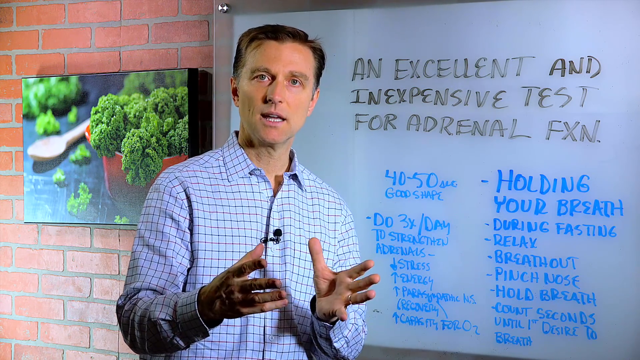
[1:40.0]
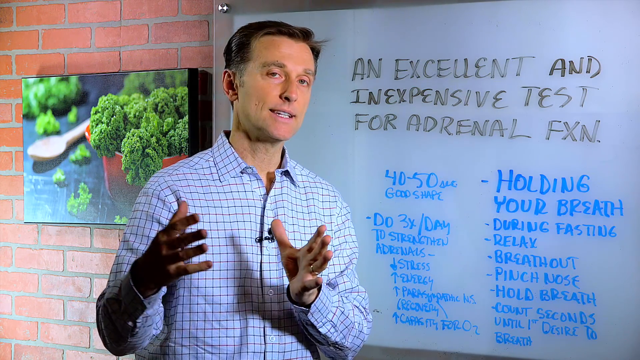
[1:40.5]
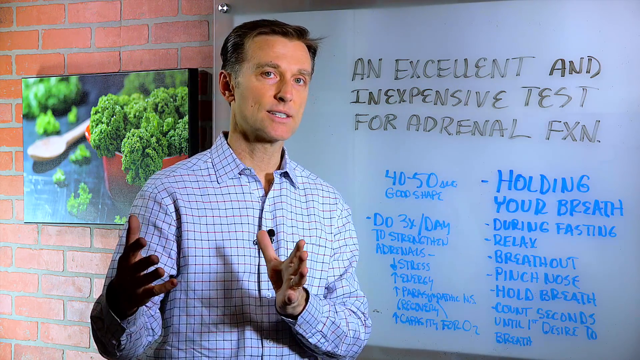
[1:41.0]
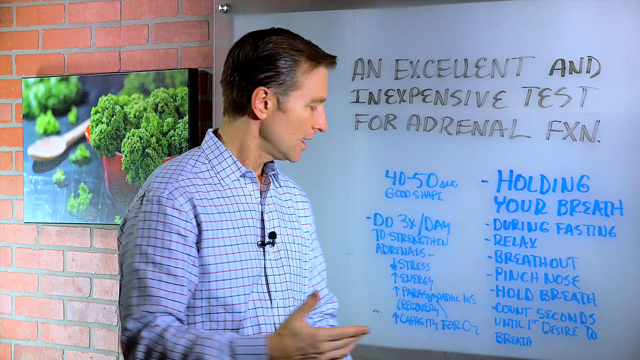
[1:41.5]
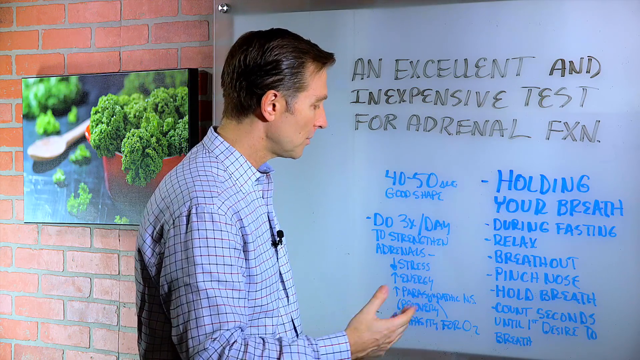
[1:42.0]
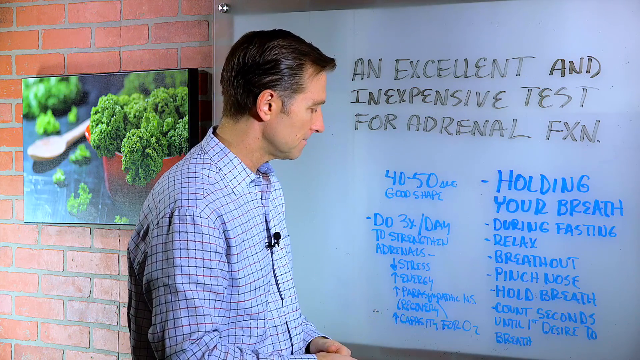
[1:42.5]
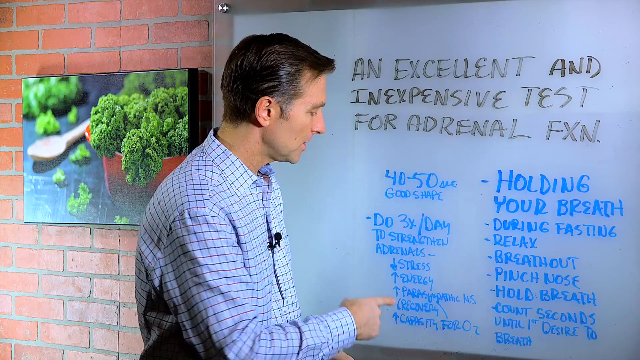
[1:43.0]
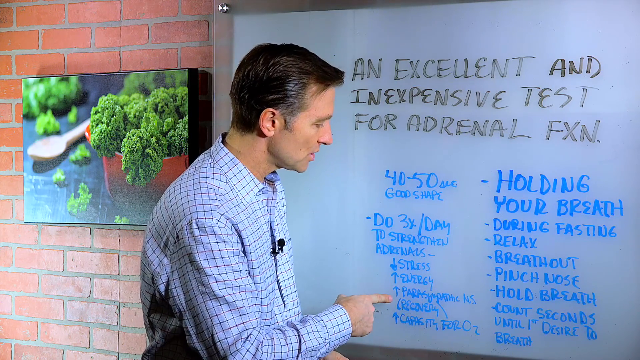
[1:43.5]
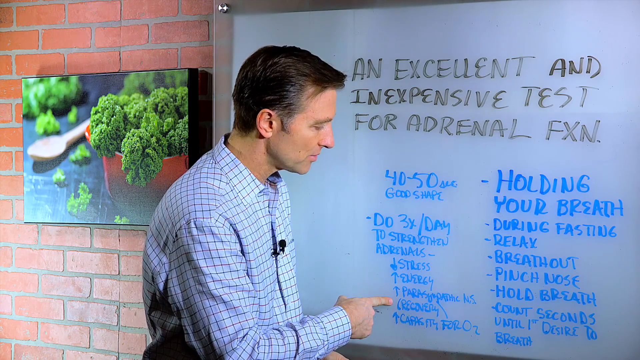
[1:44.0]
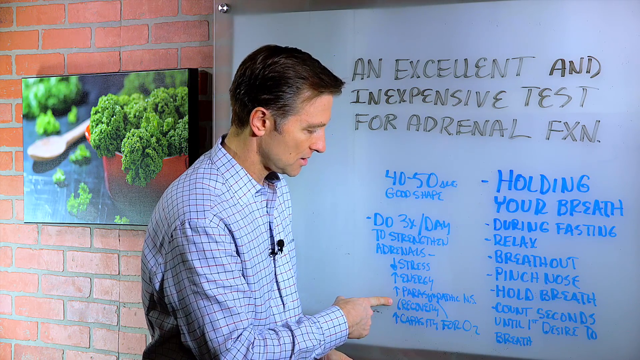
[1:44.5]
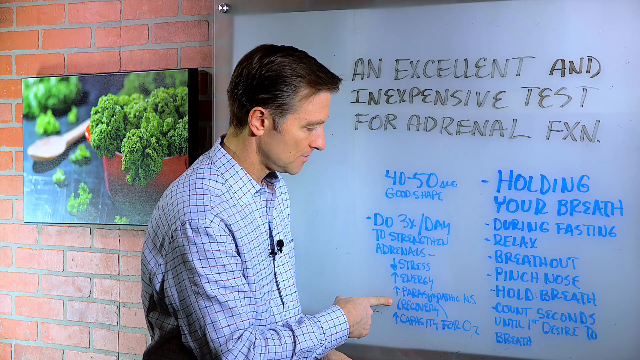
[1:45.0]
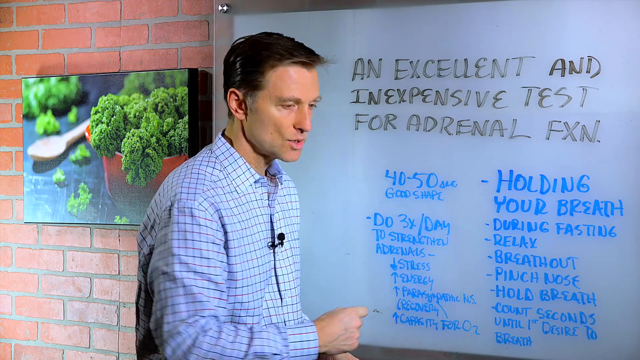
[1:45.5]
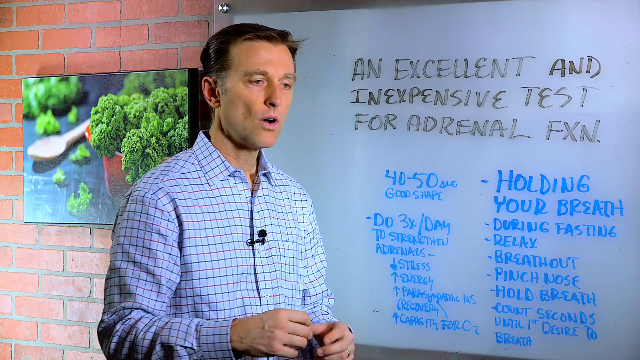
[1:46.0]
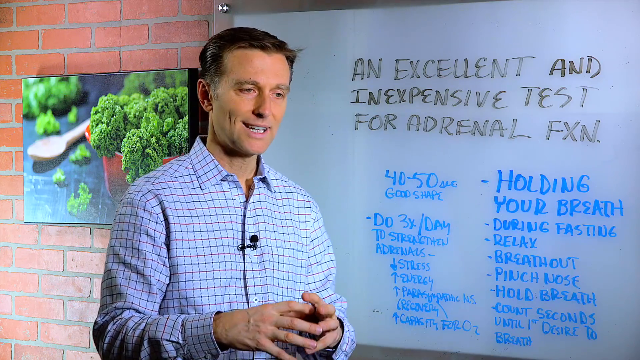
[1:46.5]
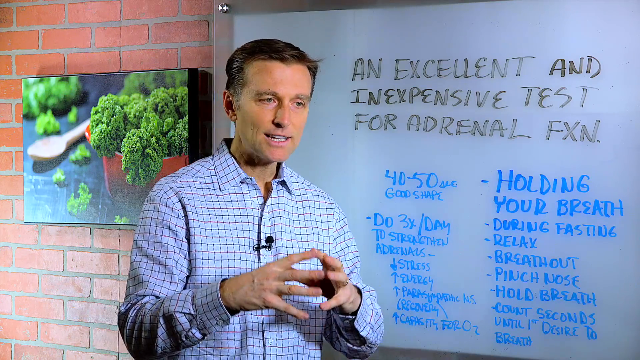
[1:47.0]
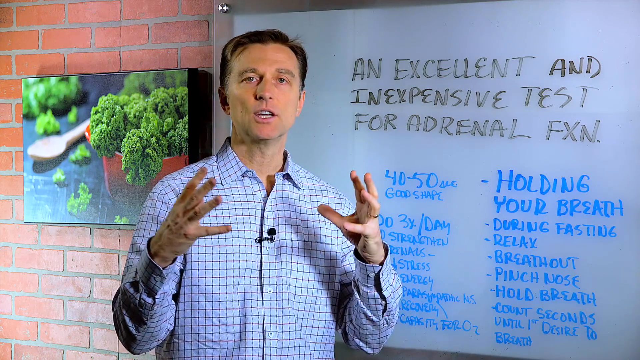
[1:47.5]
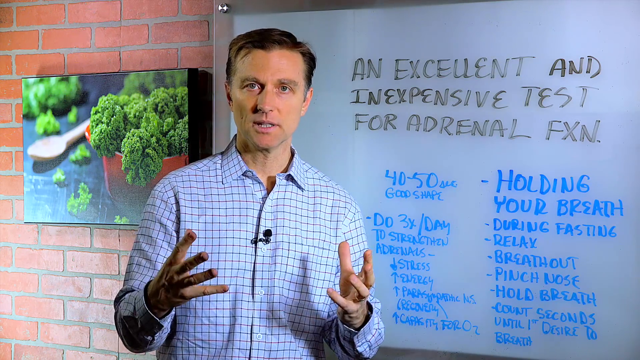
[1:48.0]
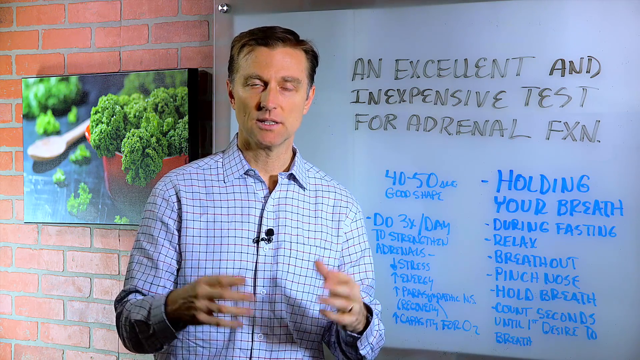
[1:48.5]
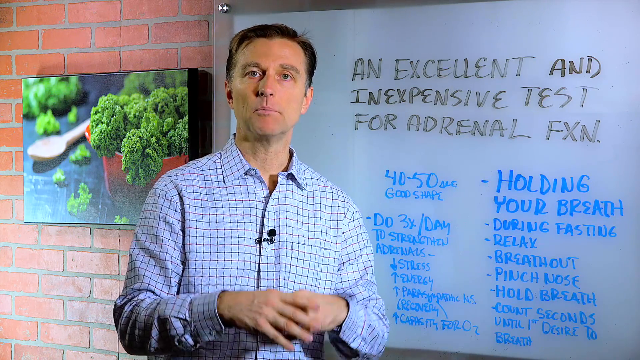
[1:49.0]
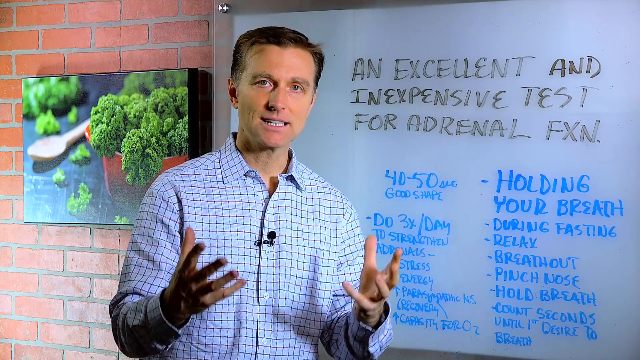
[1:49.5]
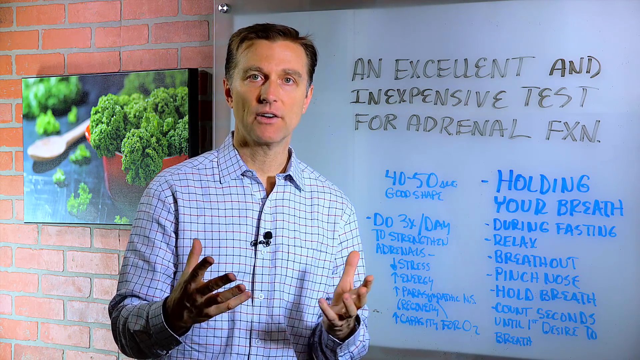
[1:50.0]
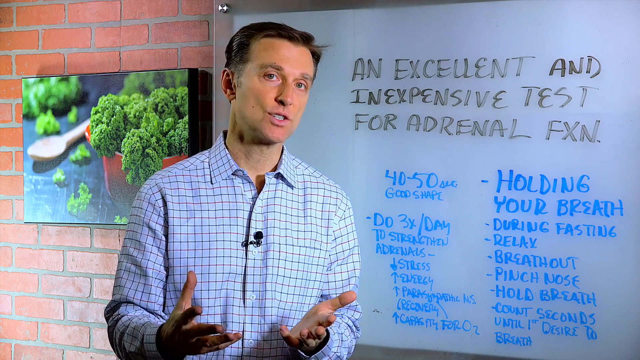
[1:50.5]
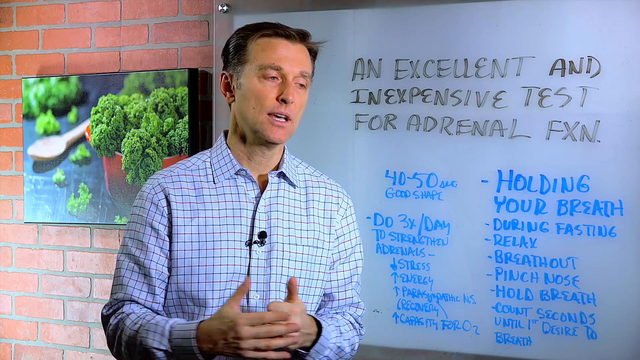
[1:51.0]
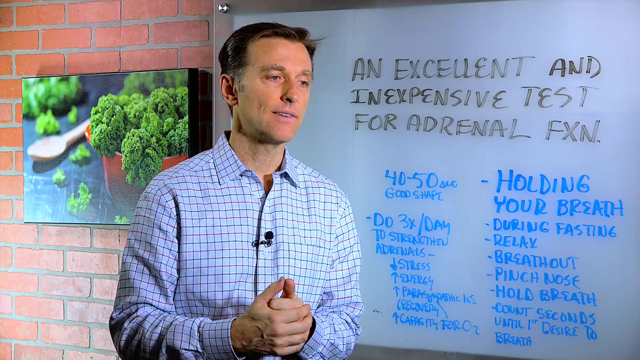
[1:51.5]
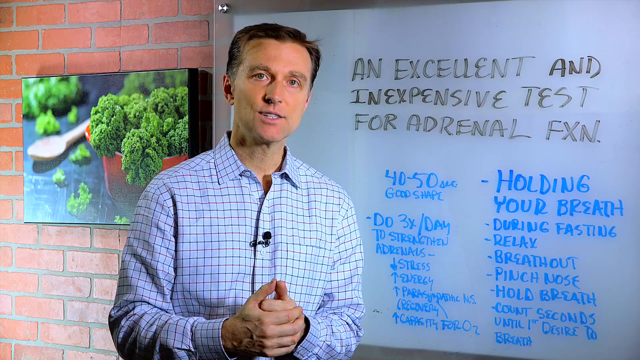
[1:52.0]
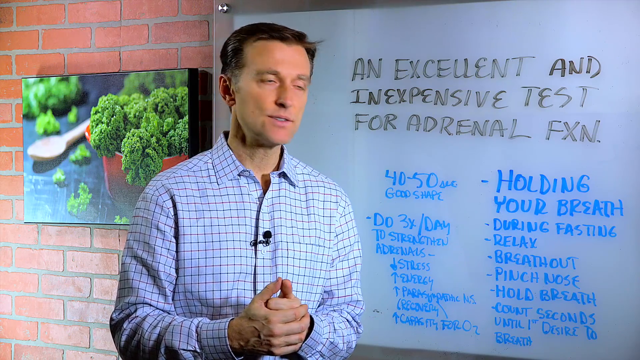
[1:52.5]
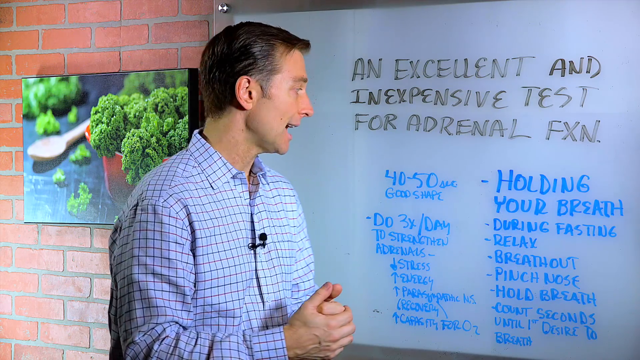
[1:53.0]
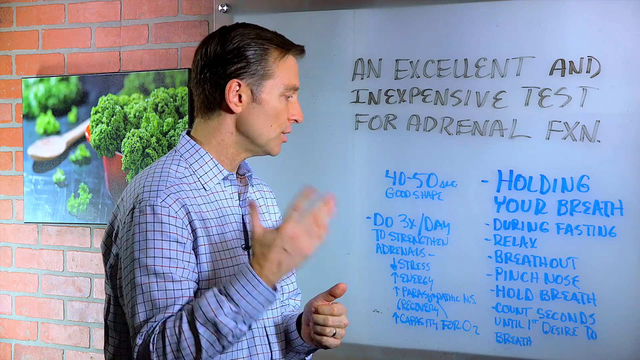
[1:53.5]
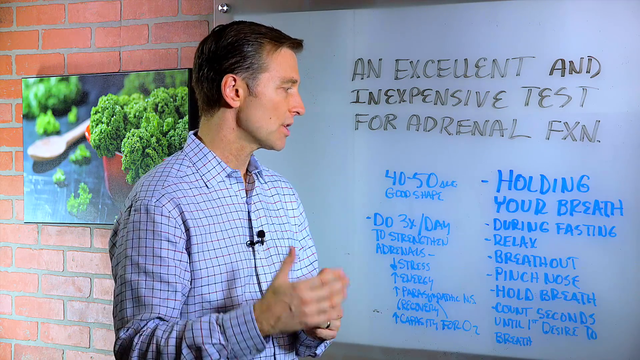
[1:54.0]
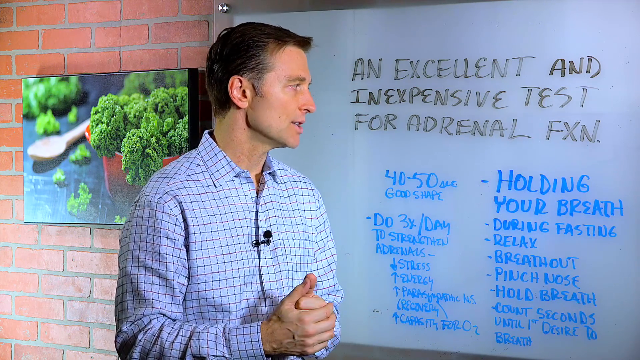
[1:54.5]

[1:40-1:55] The man in the blue checkered shirt talks and points to the last batch of words written in blue on the lower part of the whiteboard. He keeps pointing with the index finger of his right hand, then turns to face the camera again while talking. Behind him is informative wall art showing some kale in a brown bowl and a wooden spoon with pieces of kale around it. He alternates between pointing to the whiteboard and turning to face the camera, gesturing with his hands to emphasise the points written in blue.